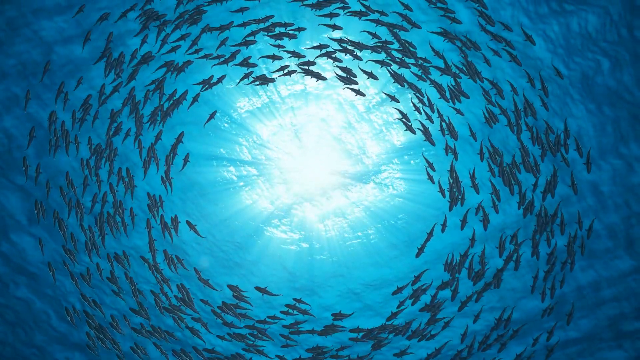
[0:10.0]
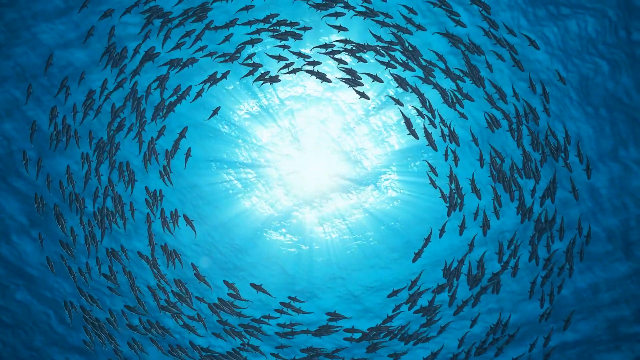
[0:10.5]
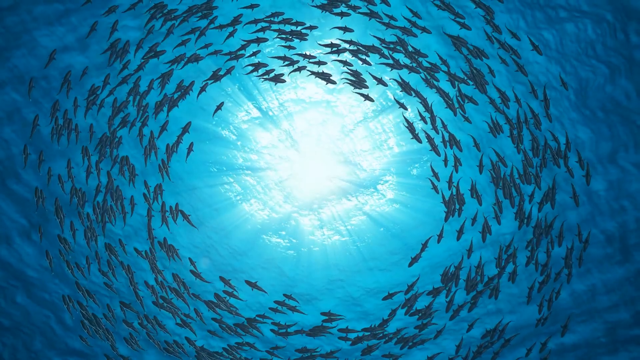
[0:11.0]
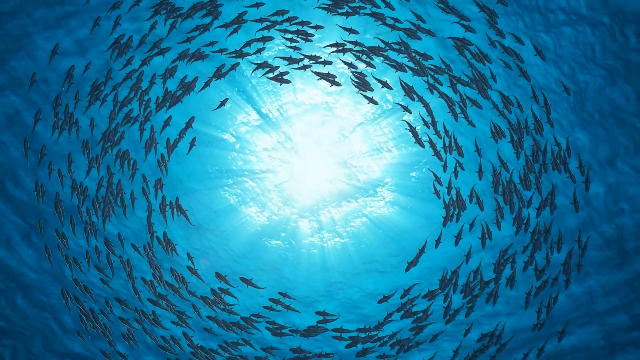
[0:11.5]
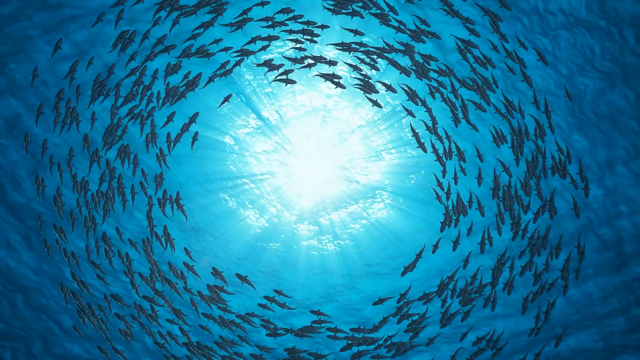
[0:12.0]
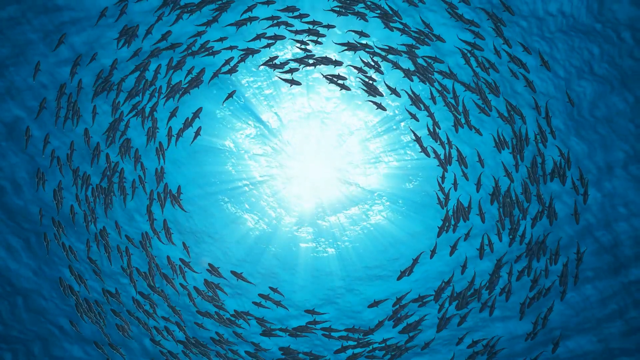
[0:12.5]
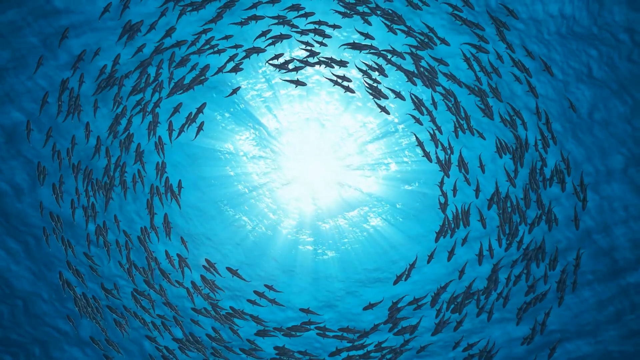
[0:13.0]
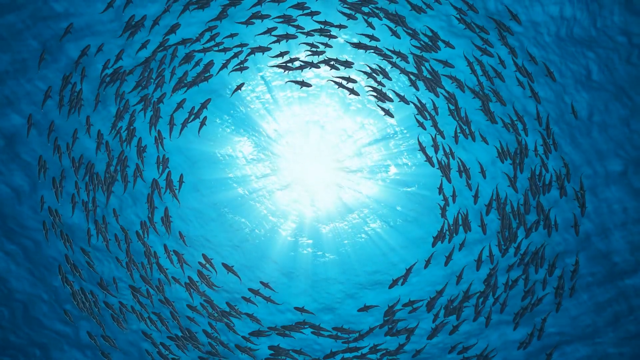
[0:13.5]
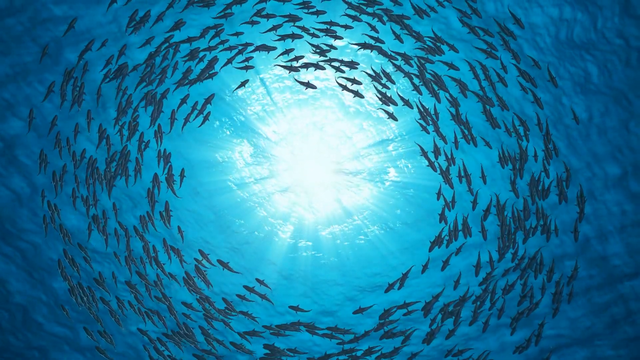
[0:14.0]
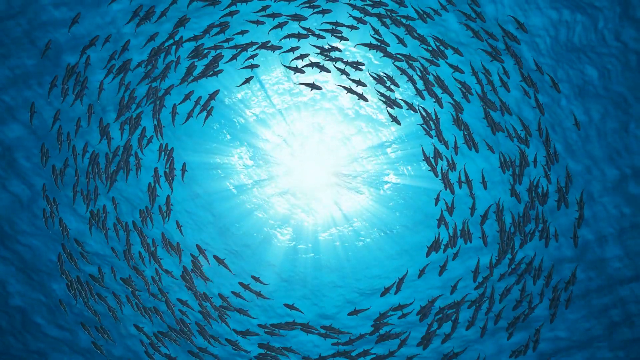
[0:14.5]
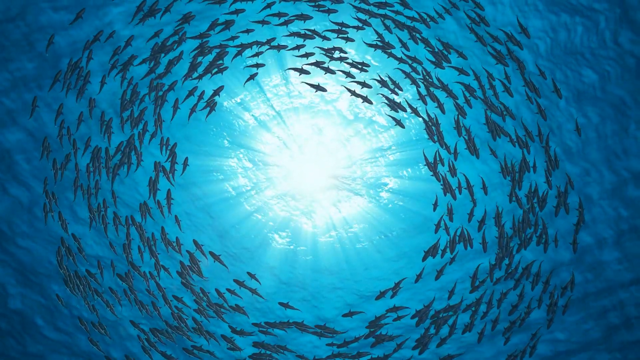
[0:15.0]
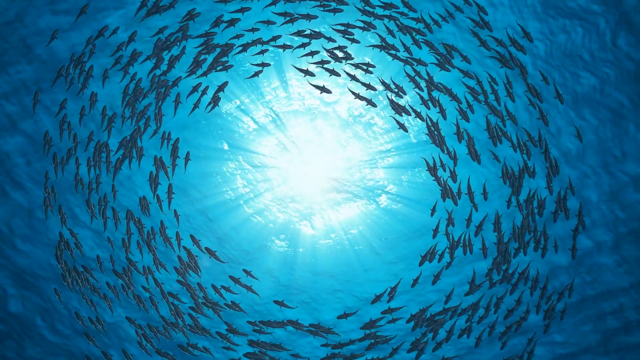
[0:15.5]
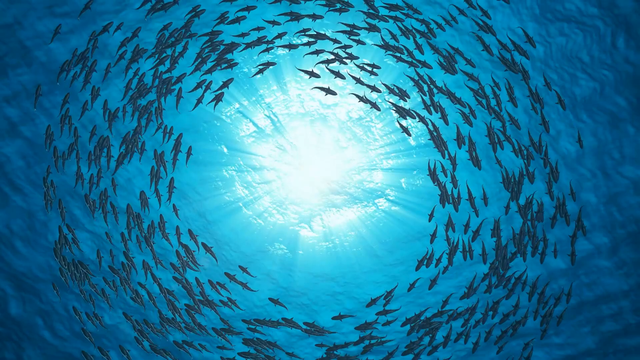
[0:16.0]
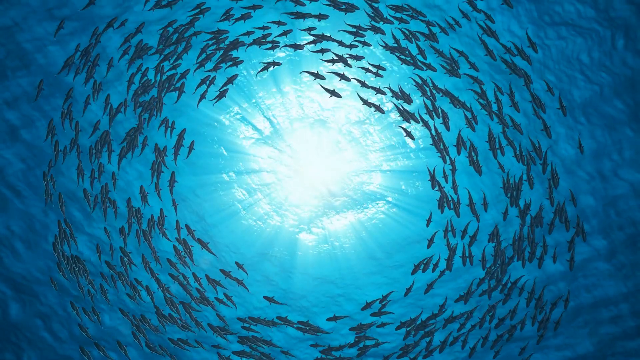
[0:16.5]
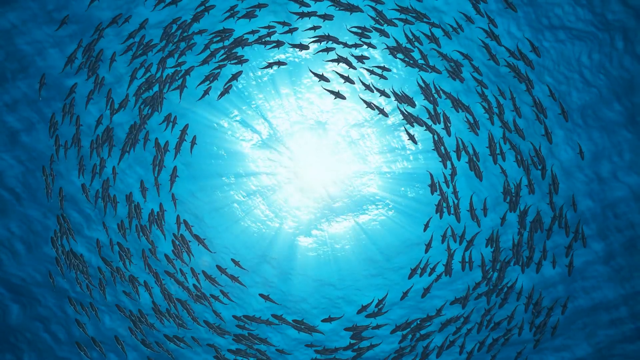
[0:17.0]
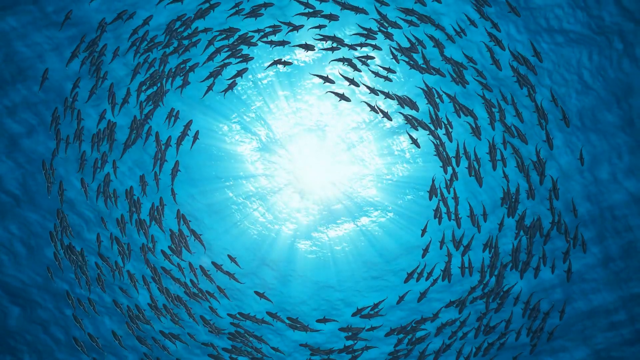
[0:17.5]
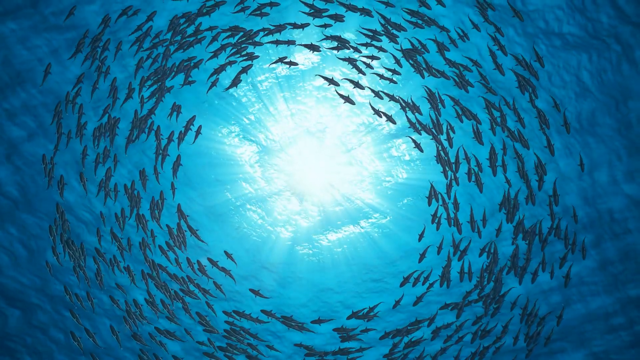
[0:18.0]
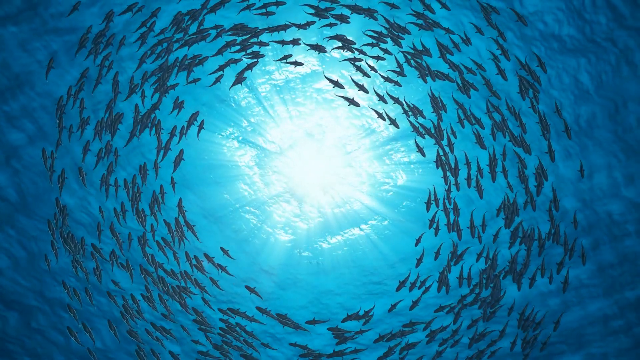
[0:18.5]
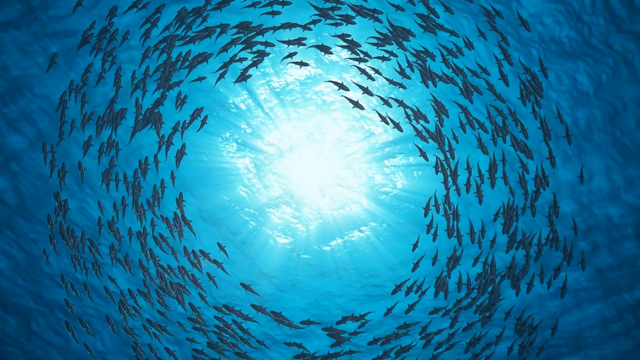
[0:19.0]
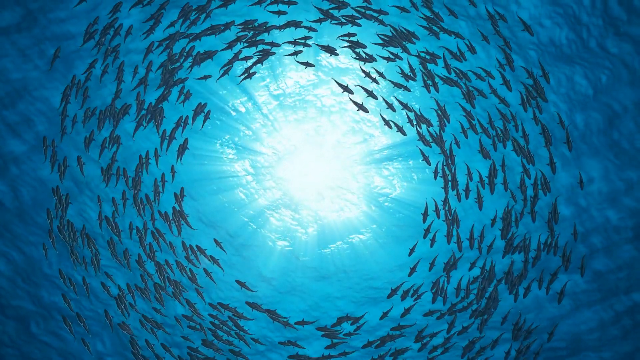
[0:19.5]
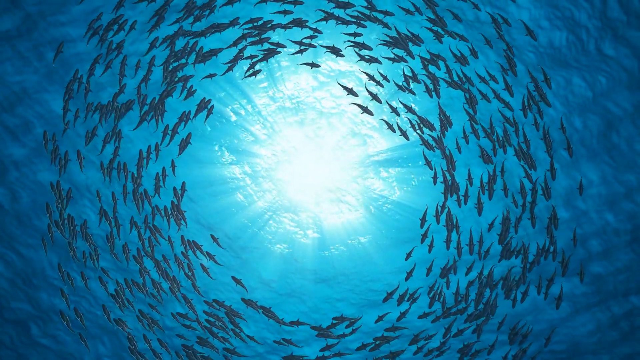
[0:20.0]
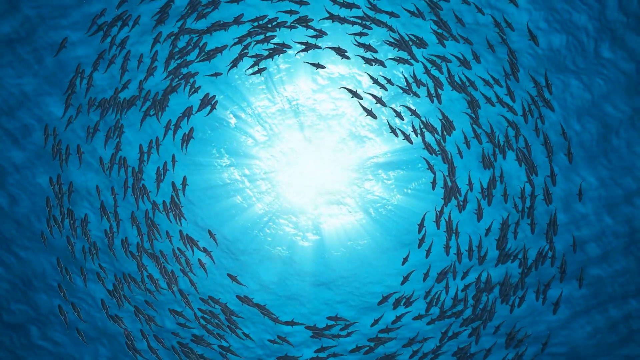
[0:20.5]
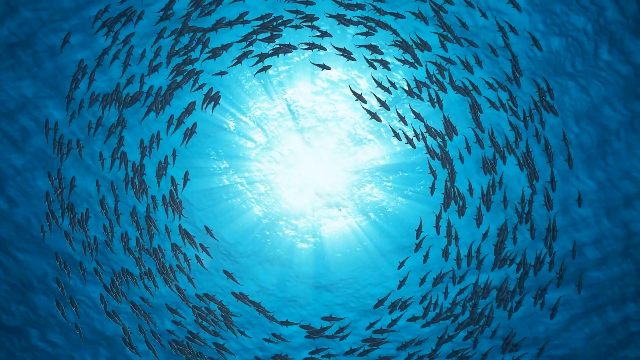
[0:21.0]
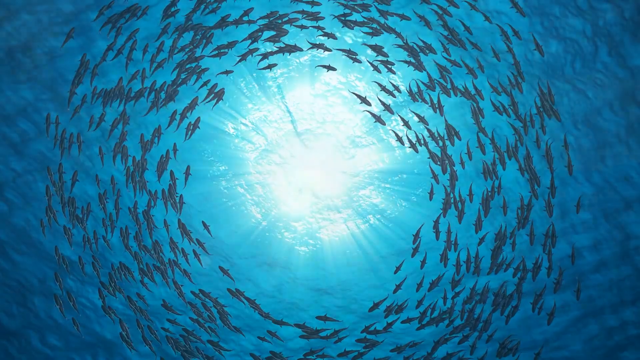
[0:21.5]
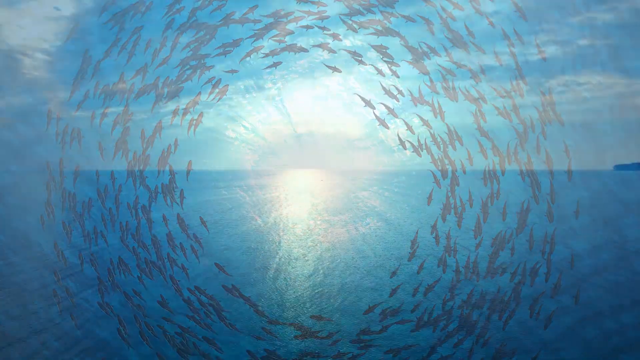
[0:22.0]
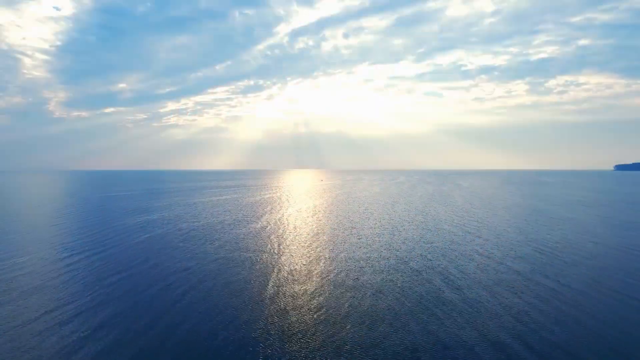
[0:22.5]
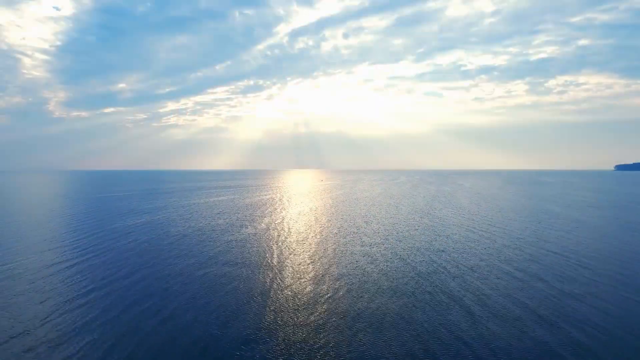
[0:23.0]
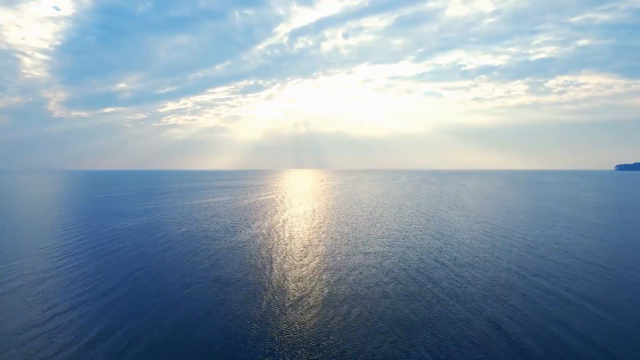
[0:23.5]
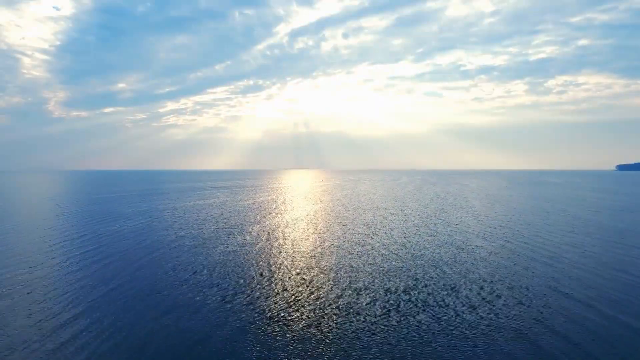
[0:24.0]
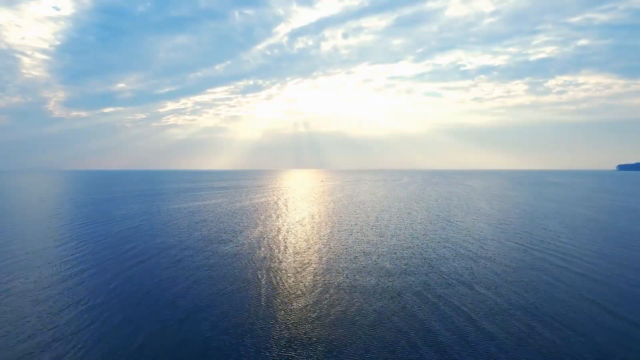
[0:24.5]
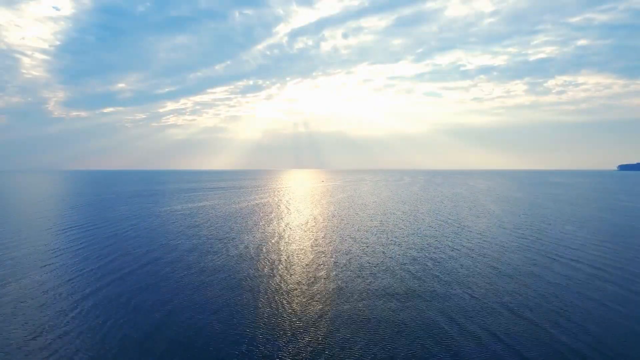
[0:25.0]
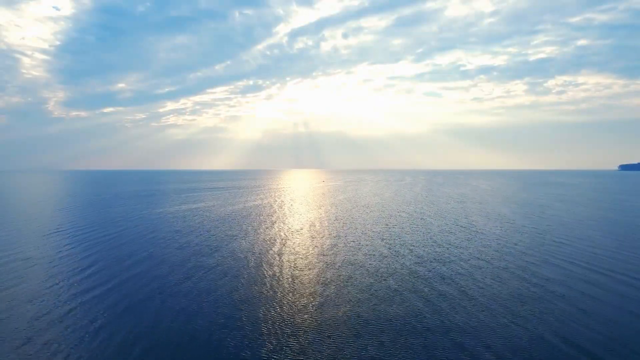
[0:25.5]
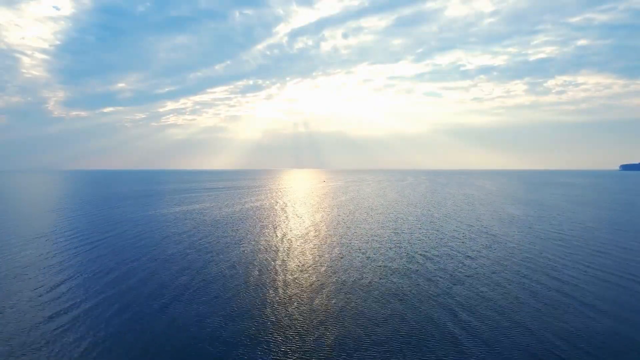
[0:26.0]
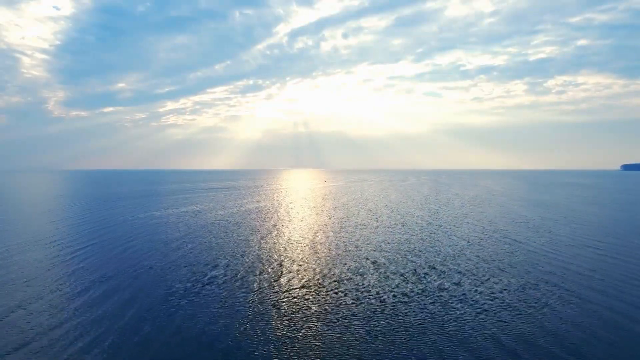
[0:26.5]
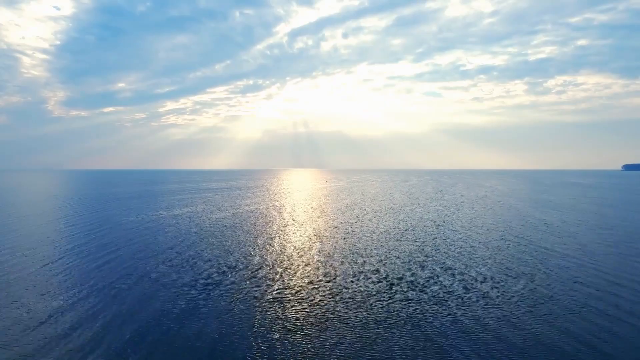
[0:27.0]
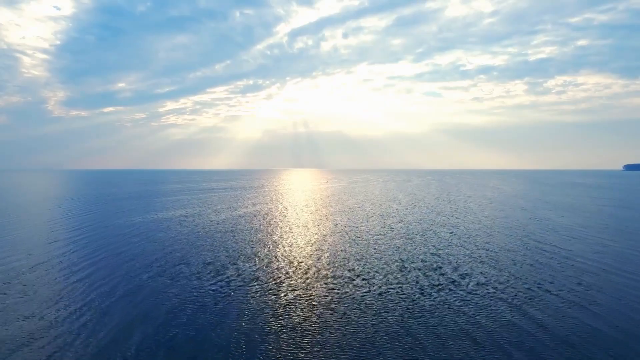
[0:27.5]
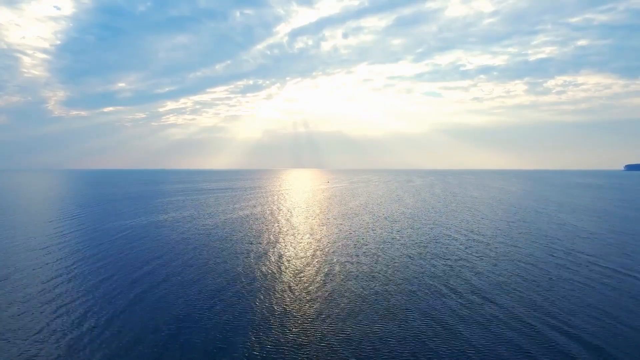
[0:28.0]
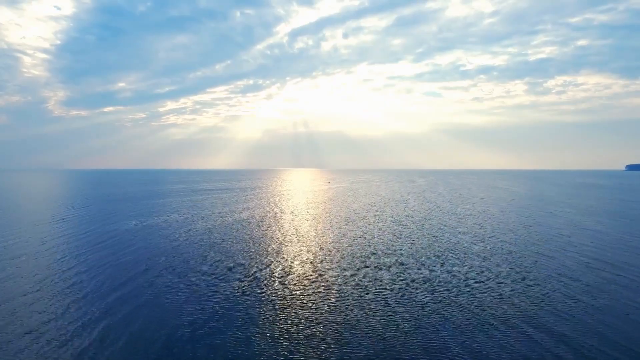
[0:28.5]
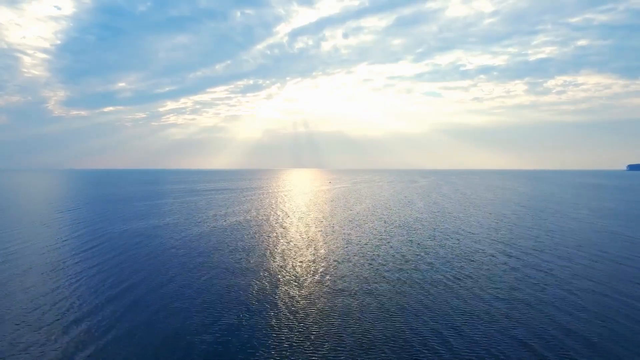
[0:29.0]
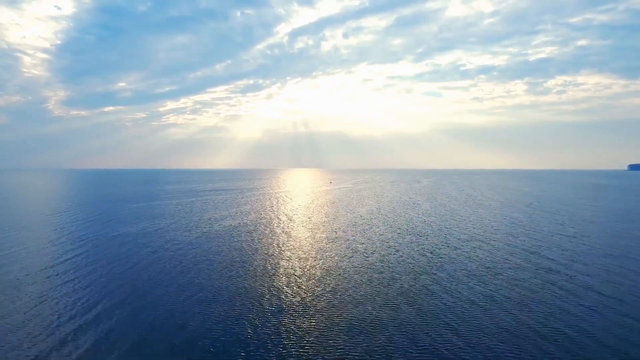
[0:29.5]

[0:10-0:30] Underwater, a large group of fish swims in a round circle. There is nothing in the middle, only water refracting the light. The view then moves above the surface of the sea or ocean, showing the sky, light reflecting off the water, the horizon, a beach and hills. The sky is blue and white, with cumulus clouds. Nothing else is visible except the hilly areas around the beaches and the horizon.